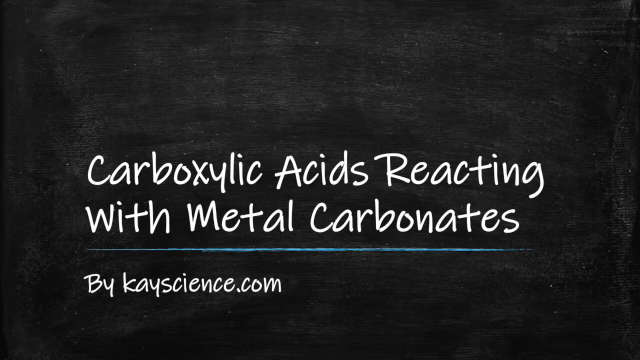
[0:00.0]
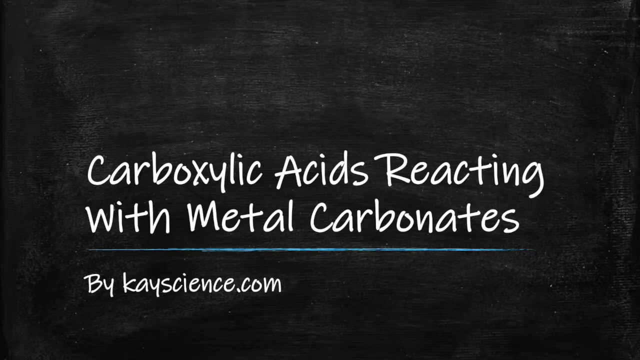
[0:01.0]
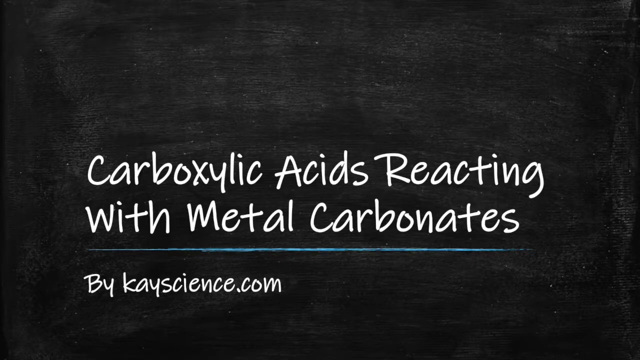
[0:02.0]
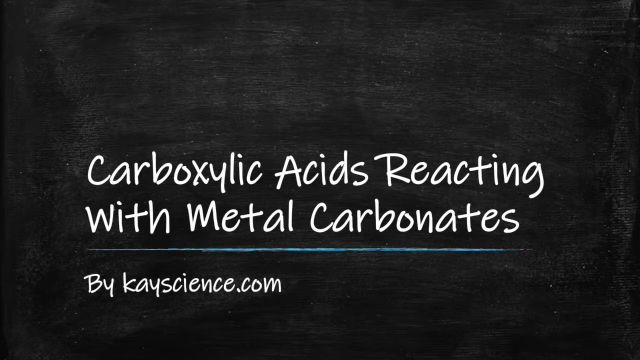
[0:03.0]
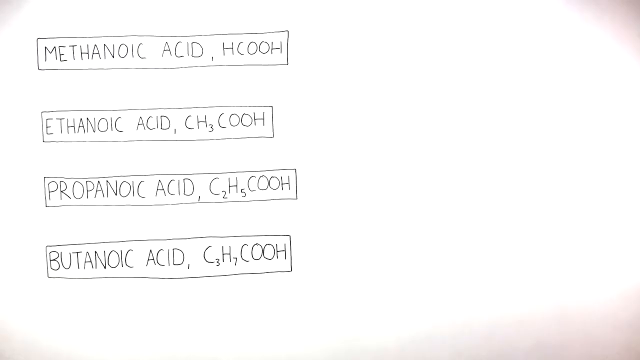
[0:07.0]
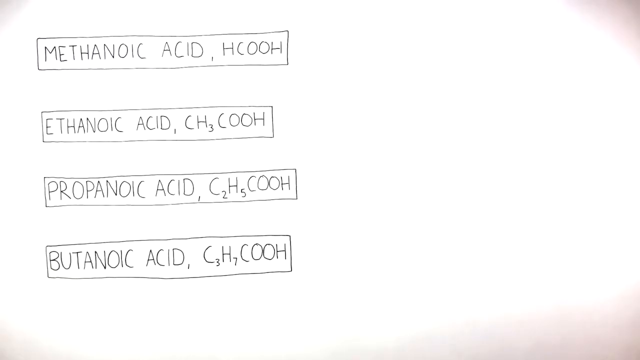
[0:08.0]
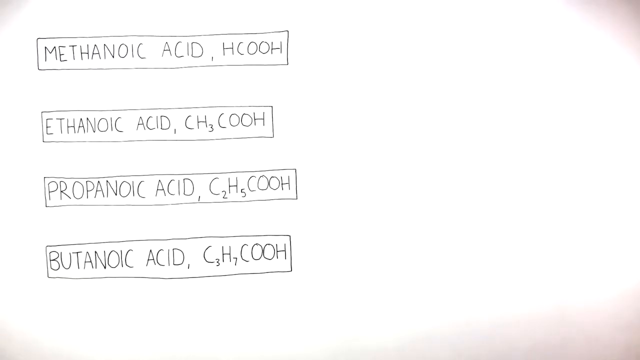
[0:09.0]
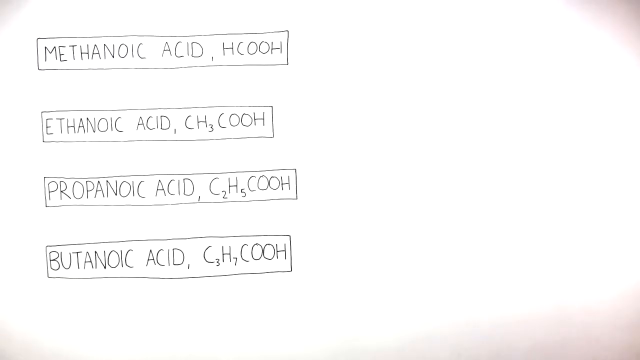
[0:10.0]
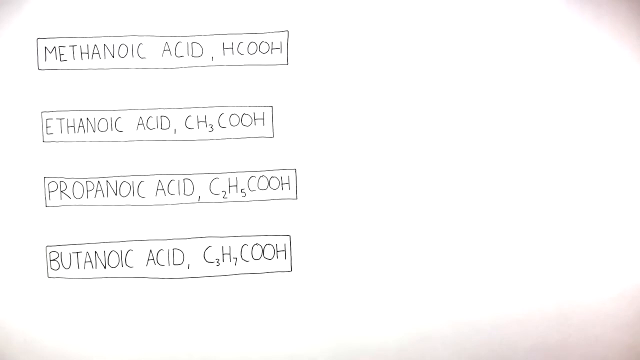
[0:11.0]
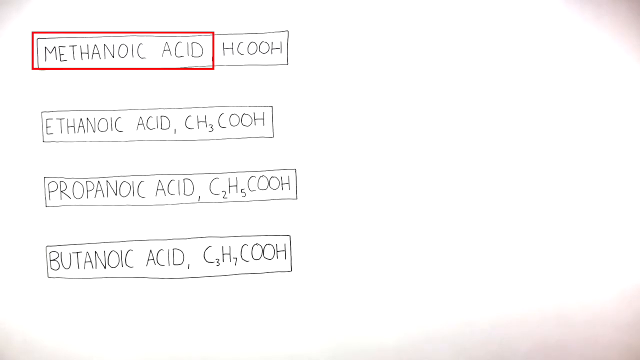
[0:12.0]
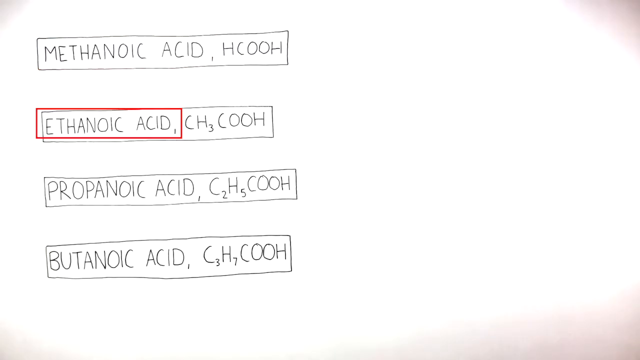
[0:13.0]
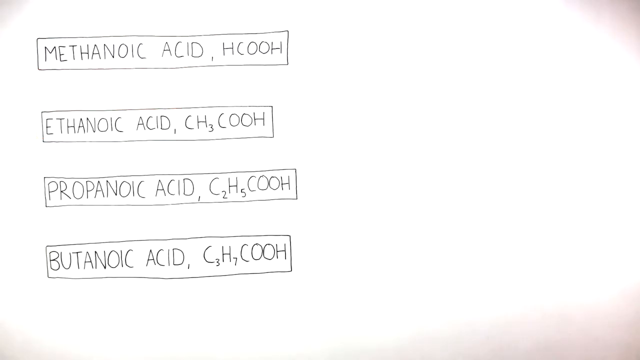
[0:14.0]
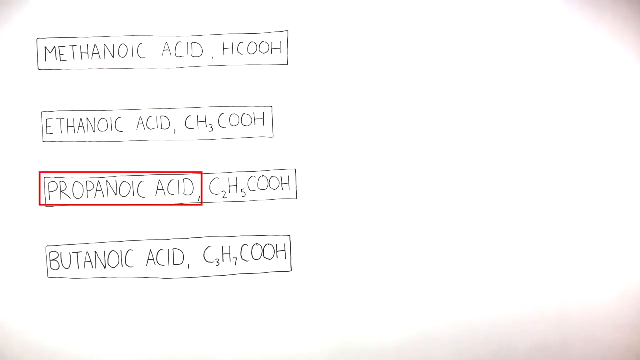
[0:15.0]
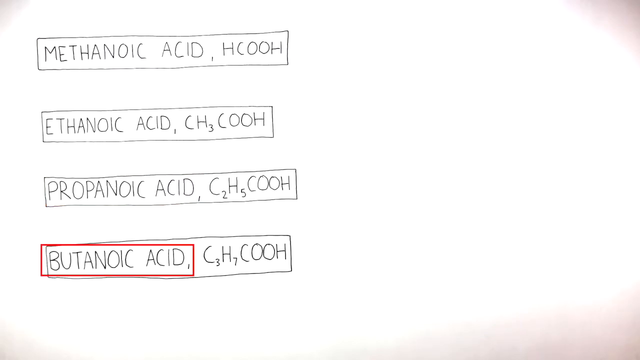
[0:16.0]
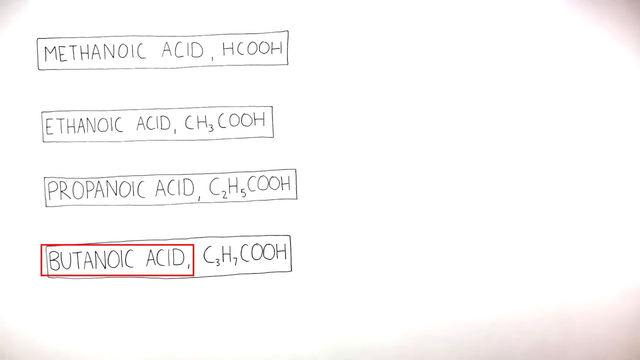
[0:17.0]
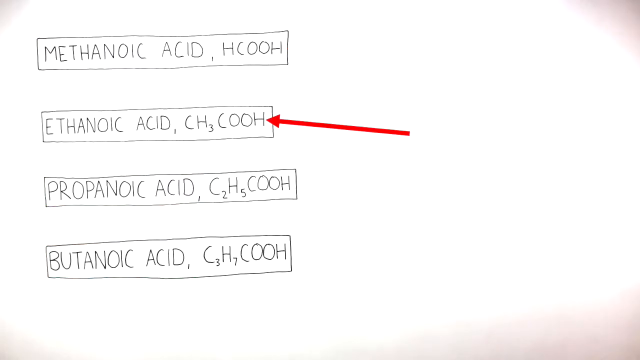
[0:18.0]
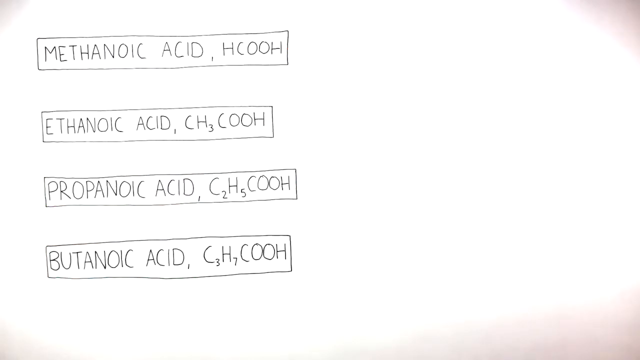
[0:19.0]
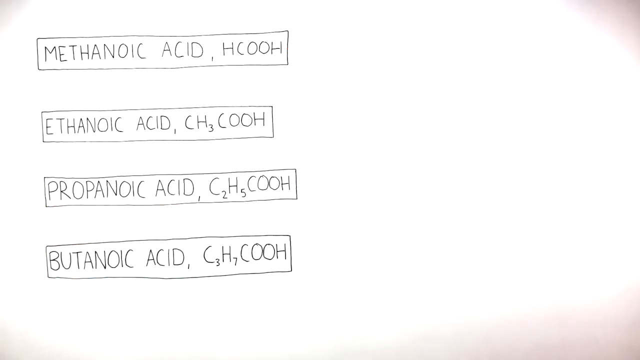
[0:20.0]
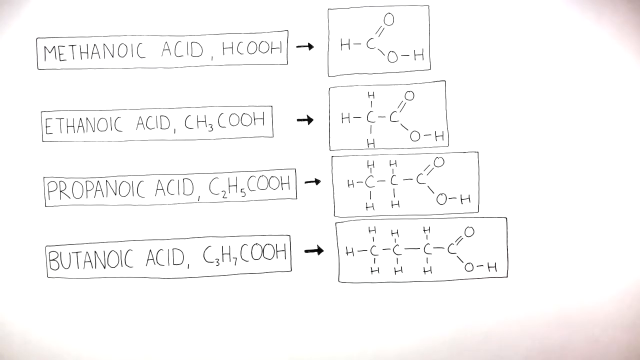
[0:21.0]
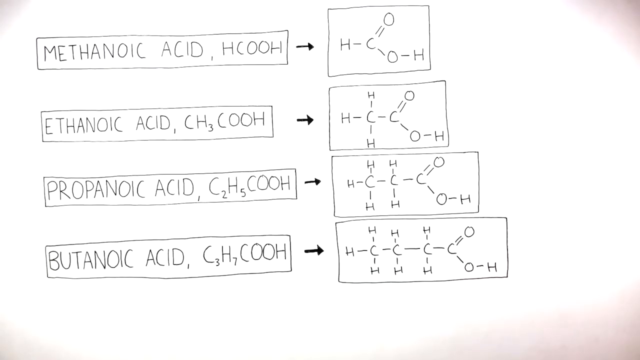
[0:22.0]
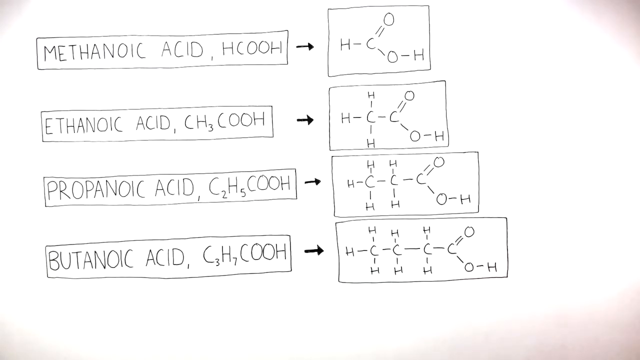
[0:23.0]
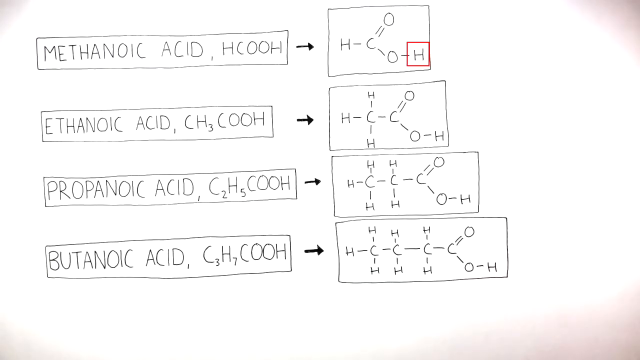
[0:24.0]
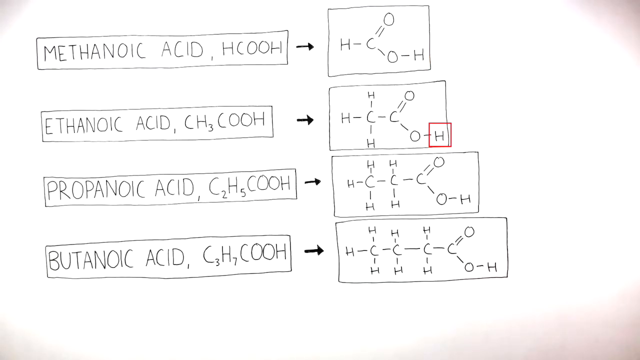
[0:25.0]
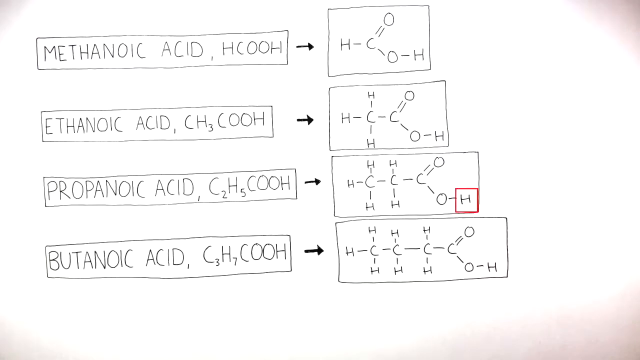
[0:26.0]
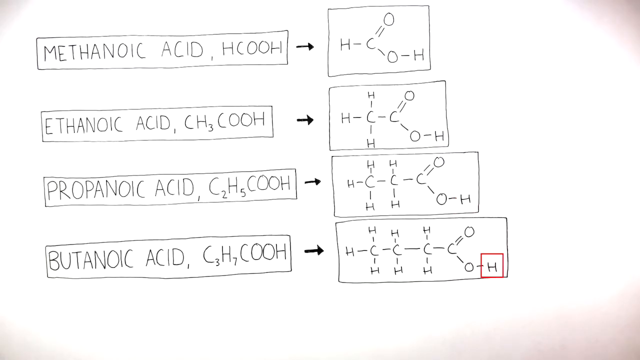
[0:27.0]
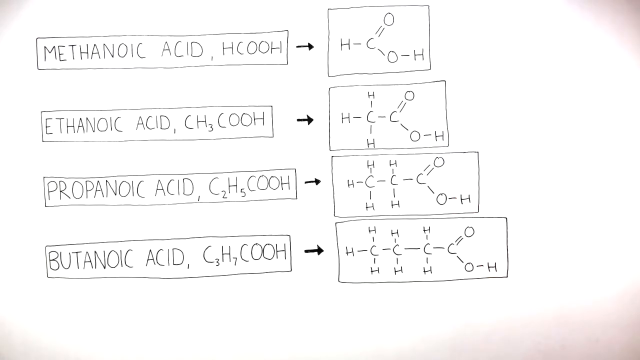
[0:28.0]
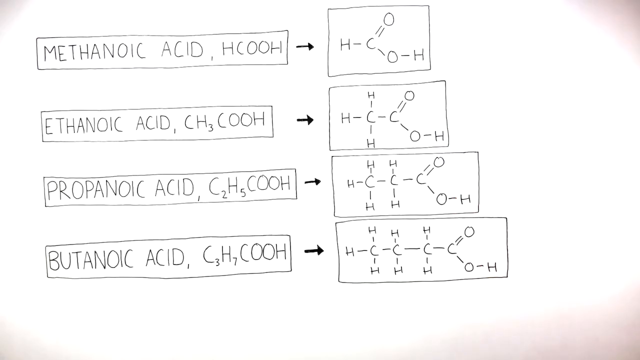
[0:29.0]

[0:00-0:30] The video opens on a blackboard with the text "carboxylic acids reacting with metal carbonates by Kscience.com". The board seems to have been rubbed out with a board duster, but not all the way, giving it the rough look of a real classroom board. The scene quickly transitions to a white page with text on its left-hand side, enclosed in a rectangular box. It lists the chemicals methanoic acid HCOOH, ethanoic acid CH3COOH, propanoic acid C2H5COOH and butanoic acid C3H7COOH. A red box briefly highlights methanoic acid, ethanoic acid, propanoic acid and butanoic acid one by one, moving down the list. A red arrow then appears on the right-hand side of the labels, where the chemical formulas are listed, pointing at each formula in turn down to butanoic acid, the last one, and then flashes away. A few reaction arrows appear, and drawings of the chemical structures of methanoic acid, ethanoic acid, propanoic acid and butanoic acid are displayed in rectangular boxes next to those arrows, beside the name of each compound. A red box appears around each chemical structure, highlighting the free hydrogen hanging off the hydroxyl group of the carboxylic acid functional group, and then the red box disappears.